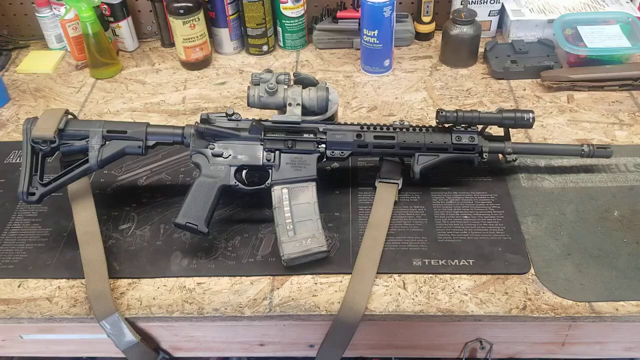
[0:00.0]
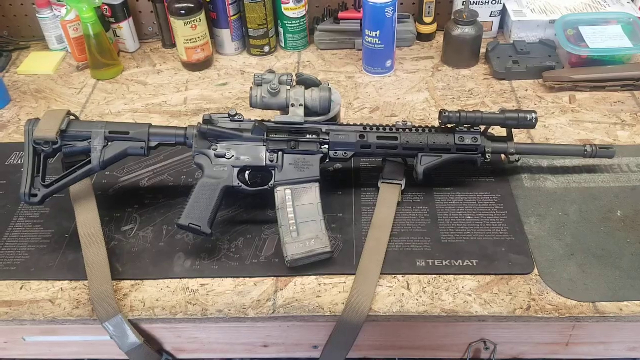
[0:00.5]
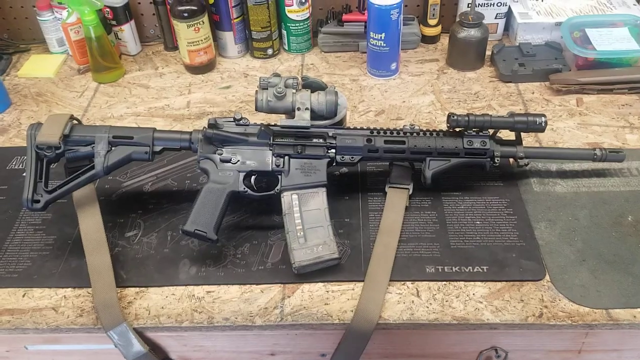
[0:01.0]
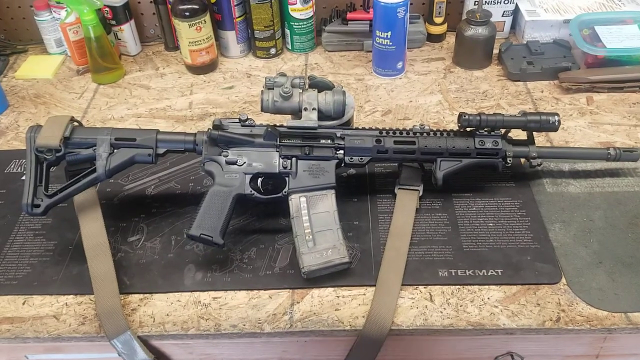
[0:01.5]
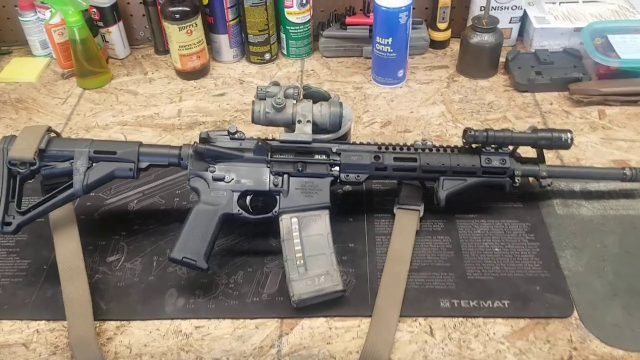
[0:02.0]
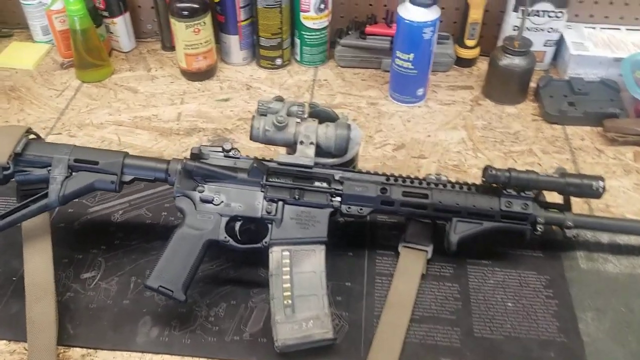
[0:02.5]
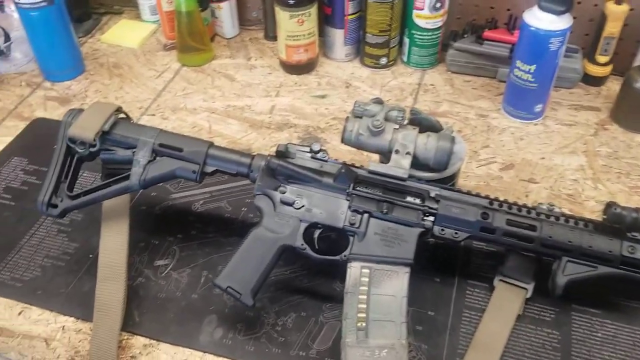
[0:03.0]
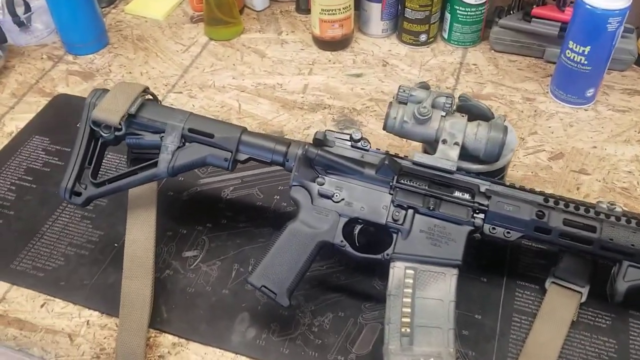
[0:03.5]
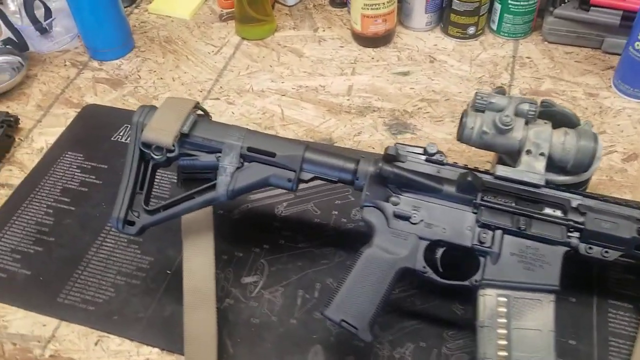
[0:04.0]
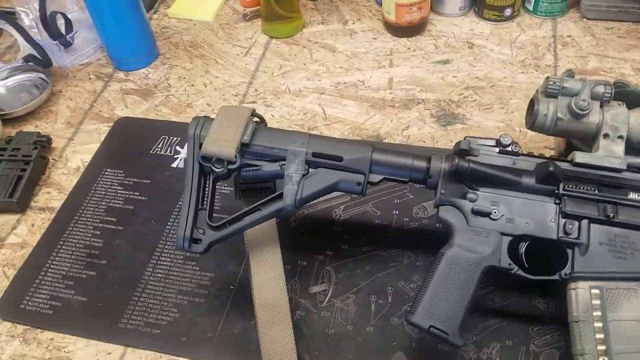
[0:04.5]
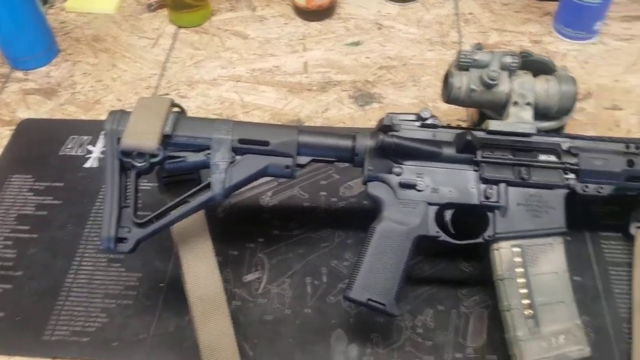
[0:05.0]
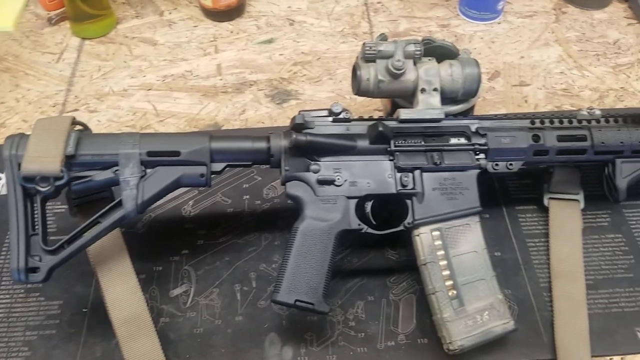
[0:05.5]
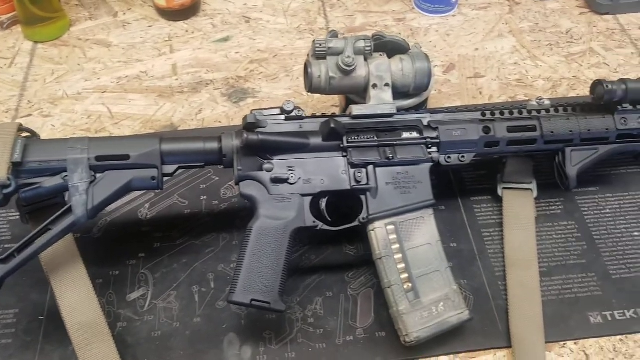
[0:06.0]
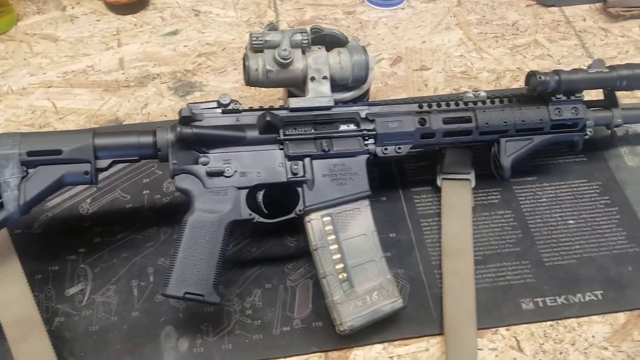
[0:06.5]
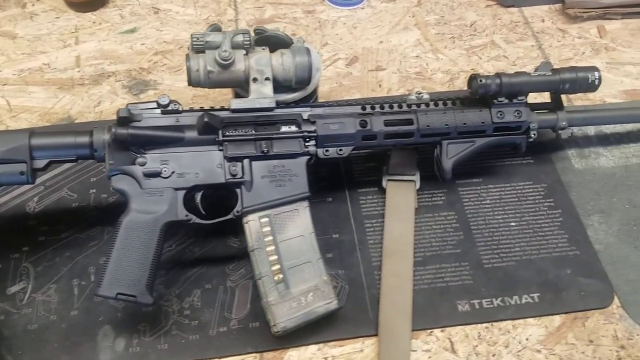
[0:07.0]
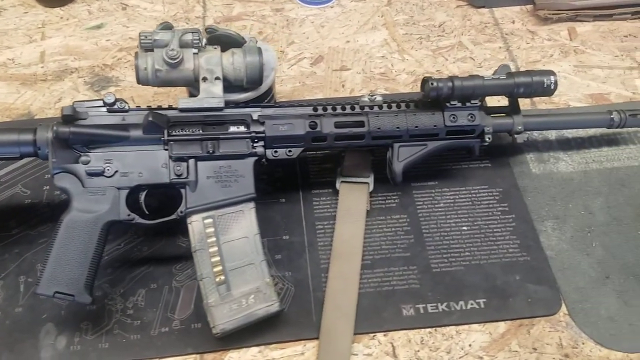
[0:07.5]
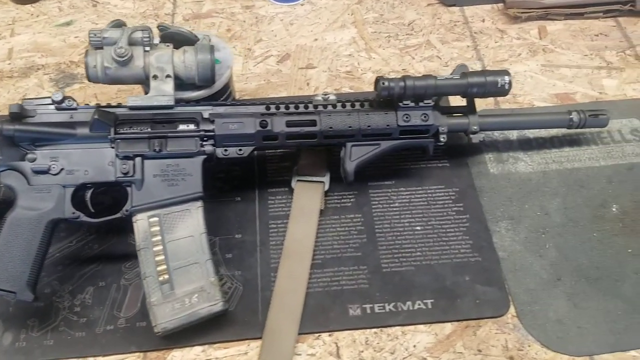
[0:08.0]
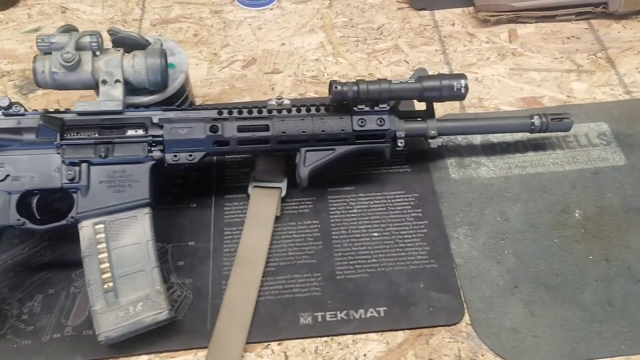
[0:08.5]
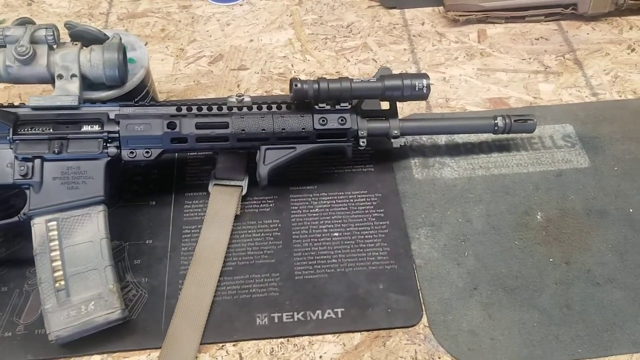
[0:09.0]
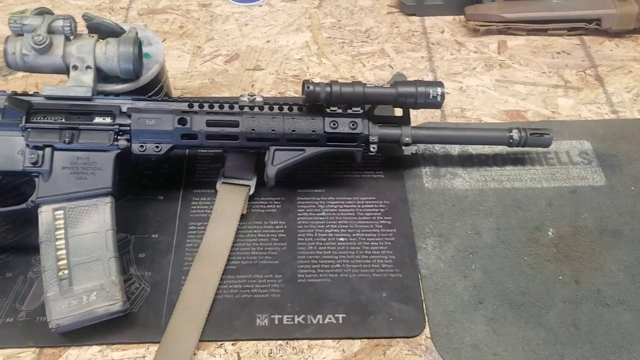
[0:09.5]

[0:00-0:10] On someone's wooden workbench is an AK-47 with several custom attachments. A flashlight is attached at the front, on the barrel area, and a custom eyesight is attached on top of the barrel above the trigger. The rifle has a shoulder strap, the magazine is in the chamber, and the pistol grip with the trigger is clearly visible just behind the magazine. The rifle is sitting on a black mat on top of the workbench; the mat's name is TekMat, and it looks like it is made of rubber. On the other side of the workbench are several bottles of liquid that appear to be different oils and lubricants used to maintain a firearm.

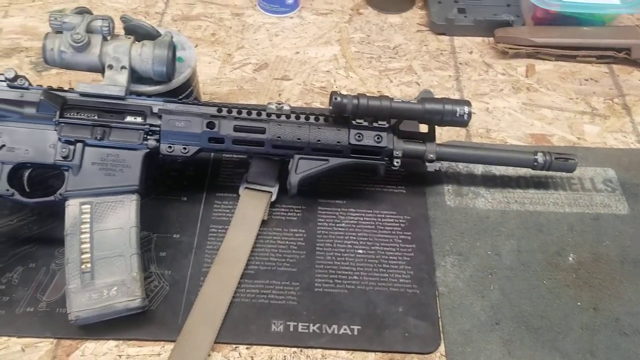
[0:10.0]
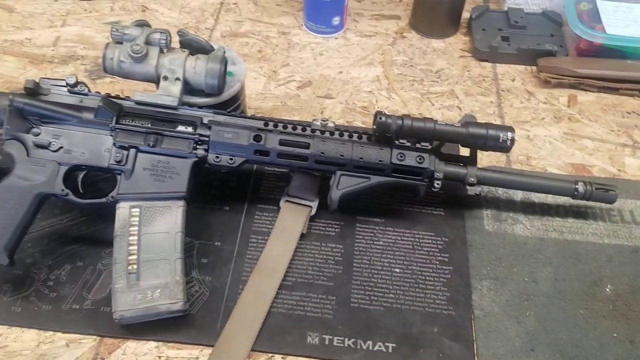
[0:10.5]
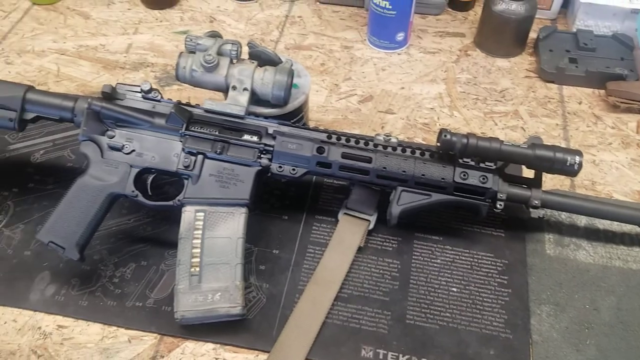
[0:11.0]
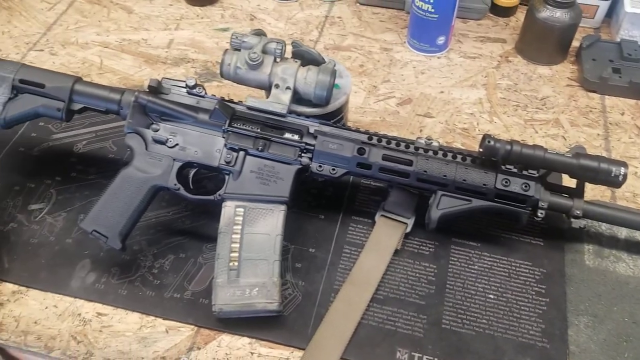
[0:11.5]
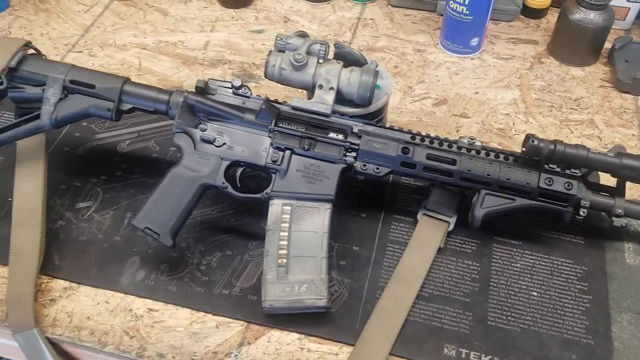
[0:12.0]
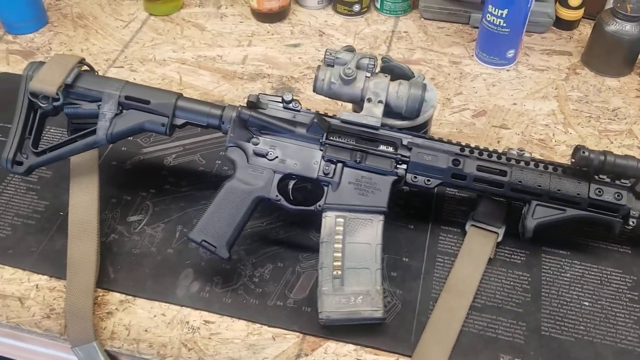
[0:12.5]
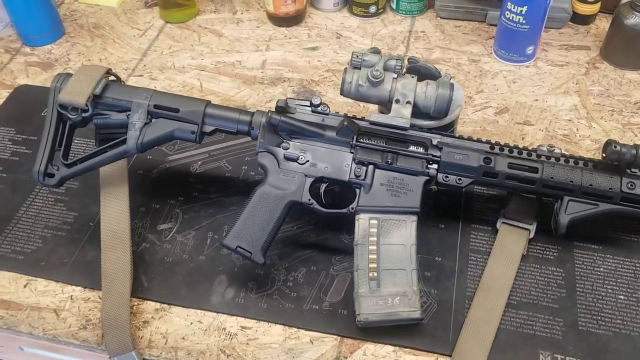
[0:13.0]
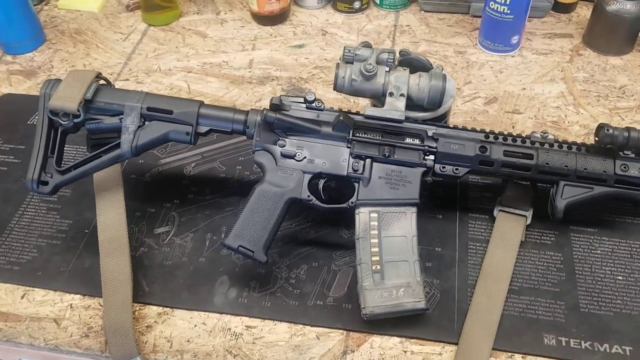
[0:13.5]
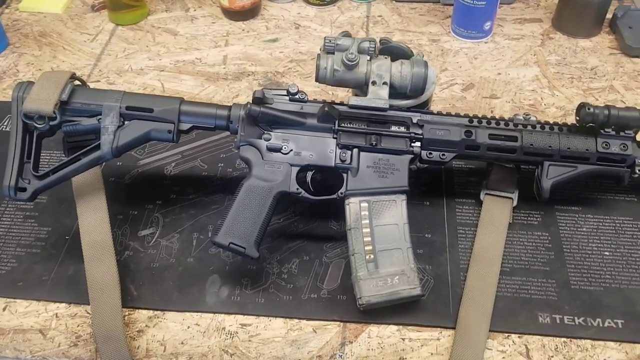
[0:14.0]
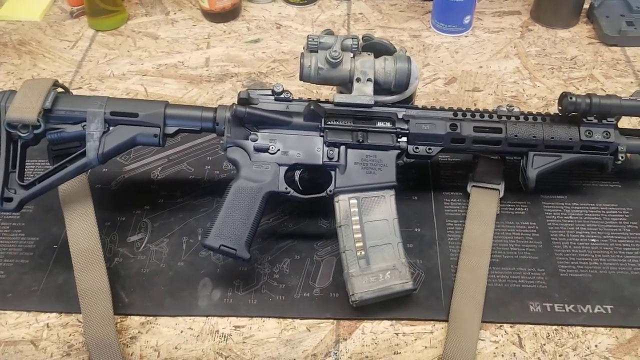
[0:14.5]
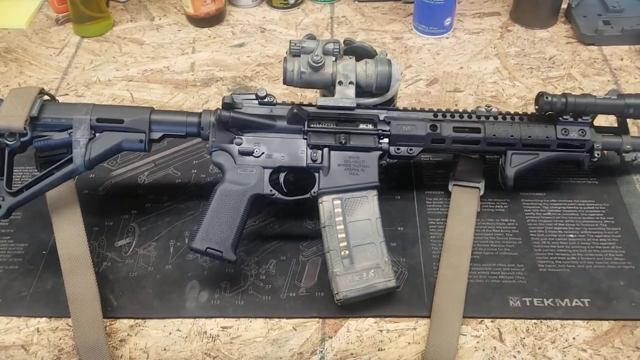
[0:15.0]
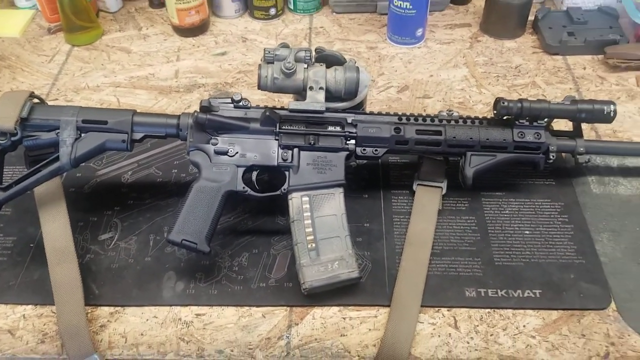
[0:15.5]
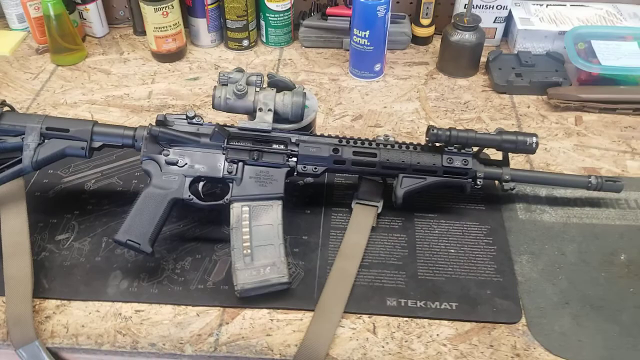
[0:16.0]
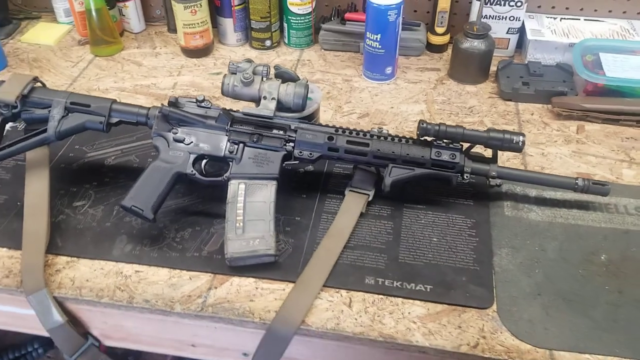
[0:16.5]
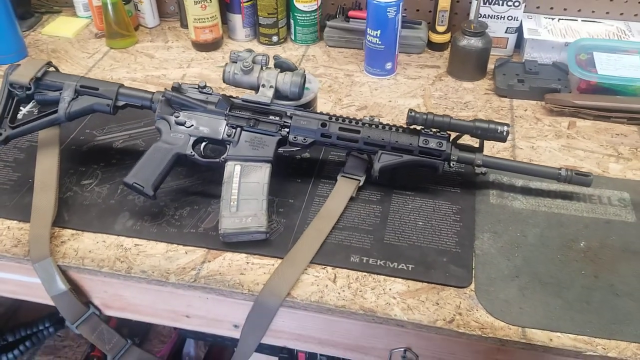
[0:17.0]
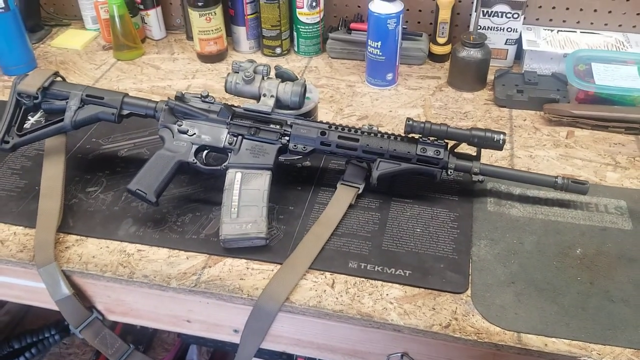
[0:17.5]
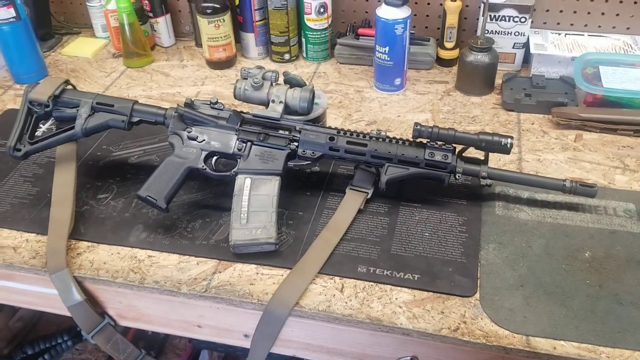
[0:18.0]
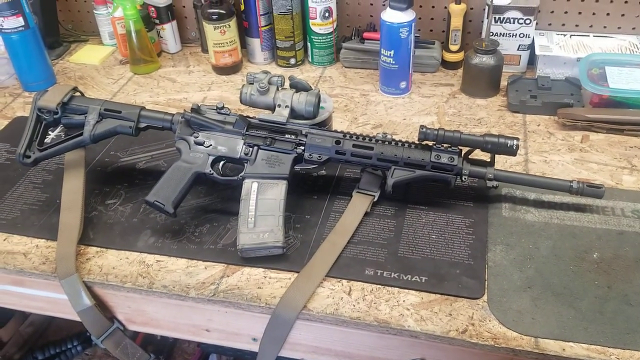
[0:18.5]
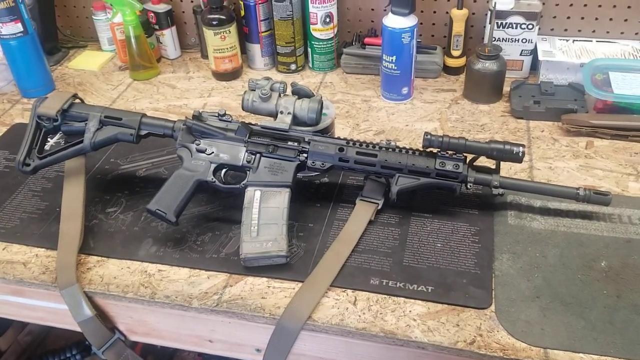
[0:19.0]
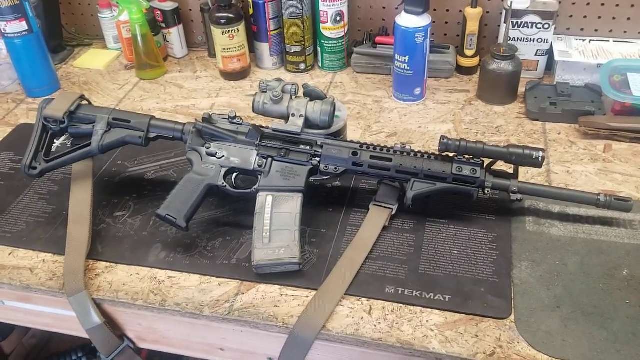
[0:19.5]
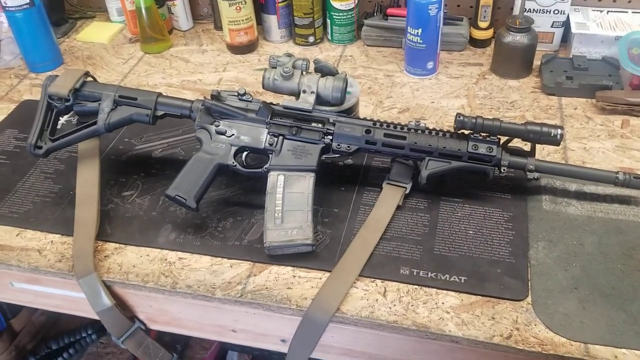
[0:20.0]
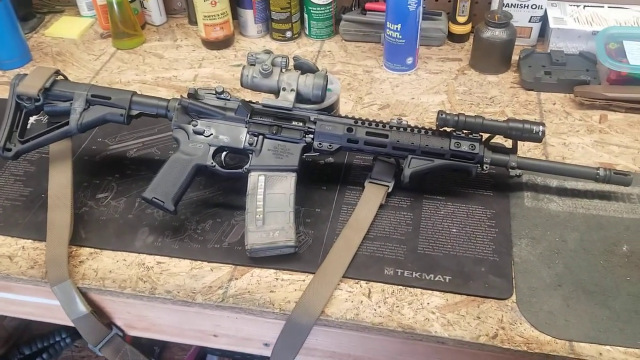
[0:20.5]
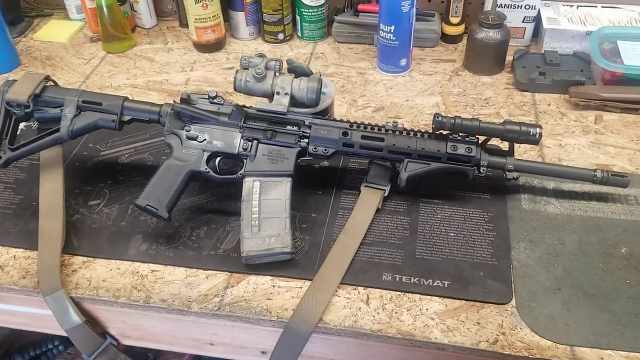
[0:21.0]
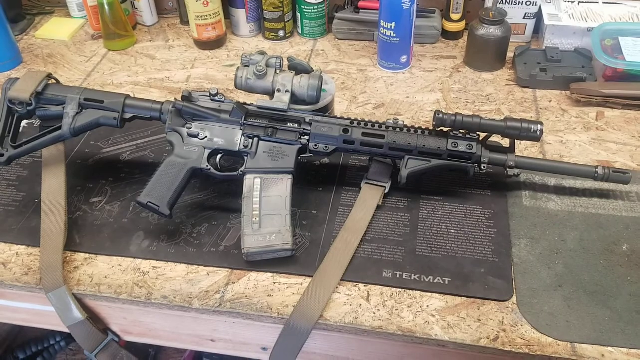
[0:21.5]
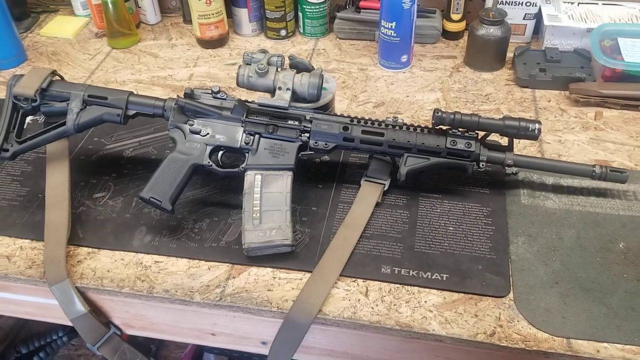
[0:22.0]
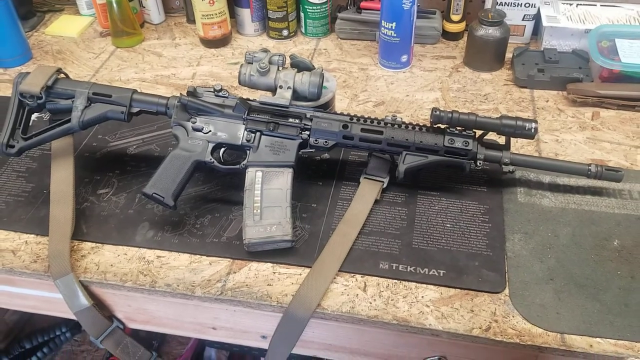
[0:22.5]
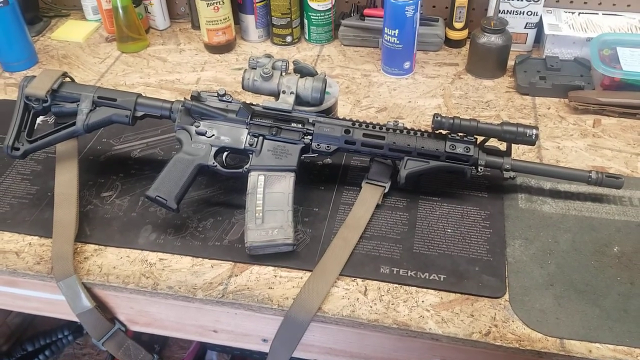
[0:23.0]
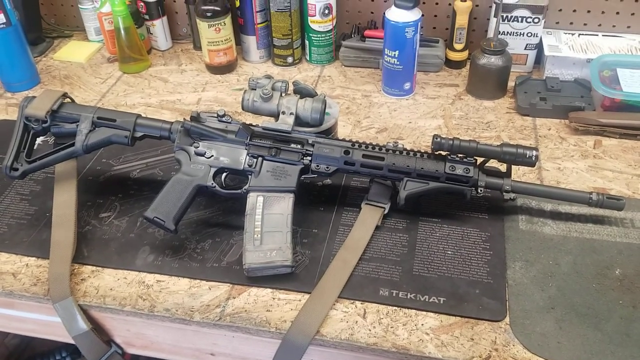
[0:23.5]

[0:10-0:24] Someone's modified AK-47 is laying on a rubber mat named TekMat on a wooden workbench. Several cans and bottles of lubricant, the kind used to maintain a firearm, are also on the workbench. The rifle has custom attachments: a flashlight on the forward barrel and a custom eyesight just above the pistol grip. The magazine is in the chamber, and the rifle also has a shoulder strap.